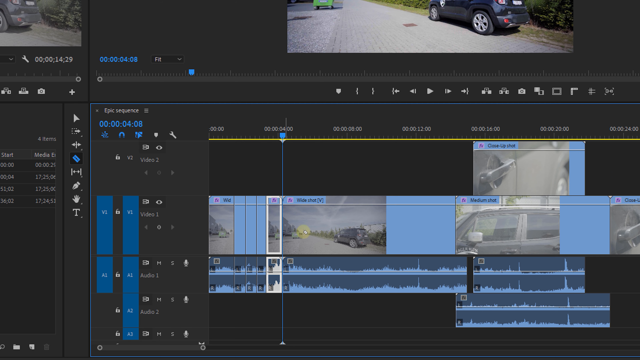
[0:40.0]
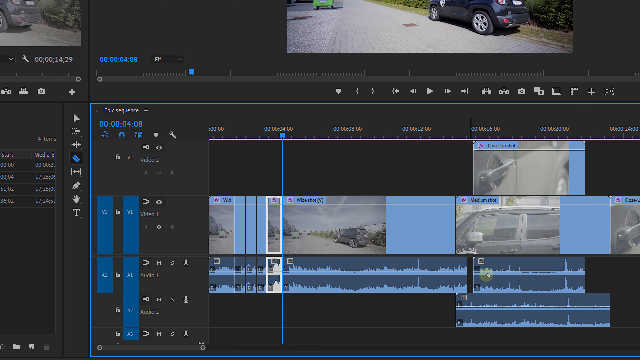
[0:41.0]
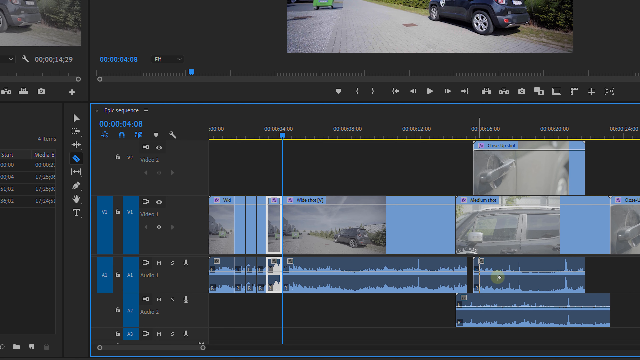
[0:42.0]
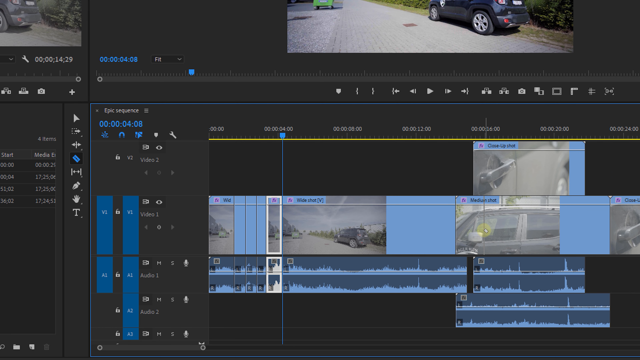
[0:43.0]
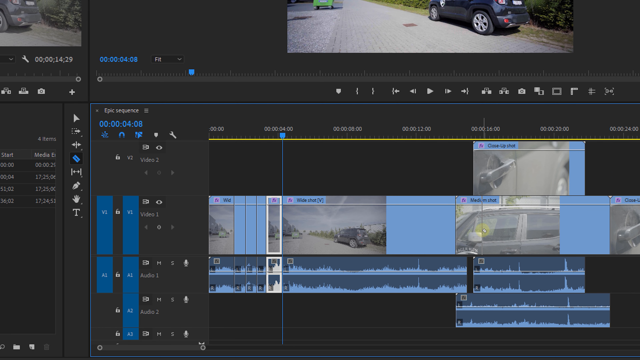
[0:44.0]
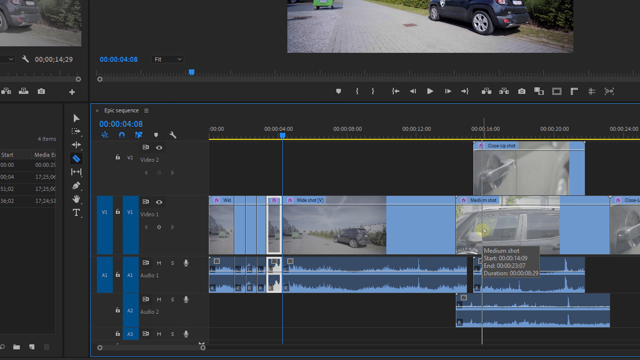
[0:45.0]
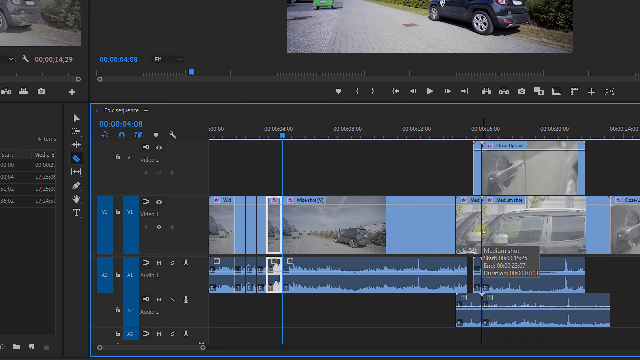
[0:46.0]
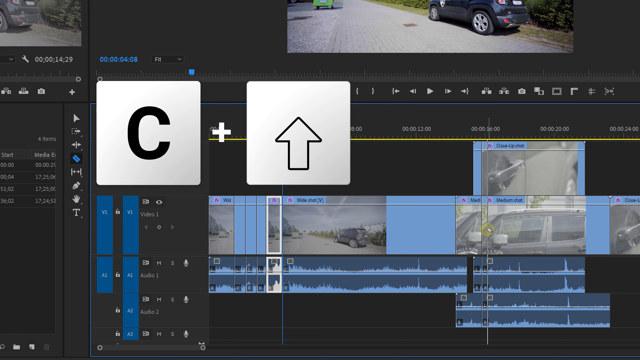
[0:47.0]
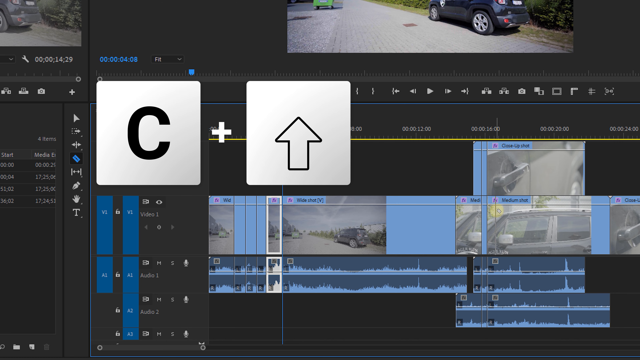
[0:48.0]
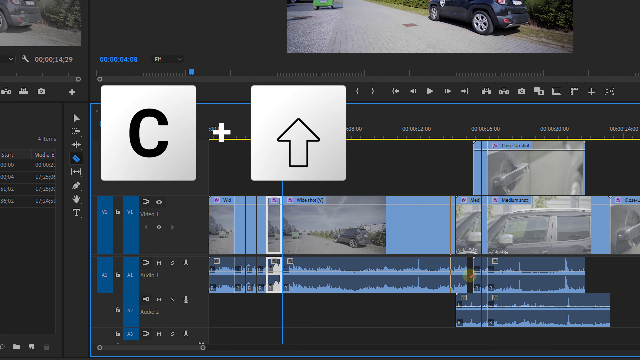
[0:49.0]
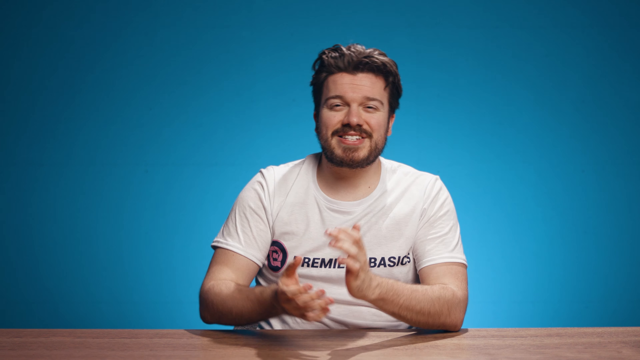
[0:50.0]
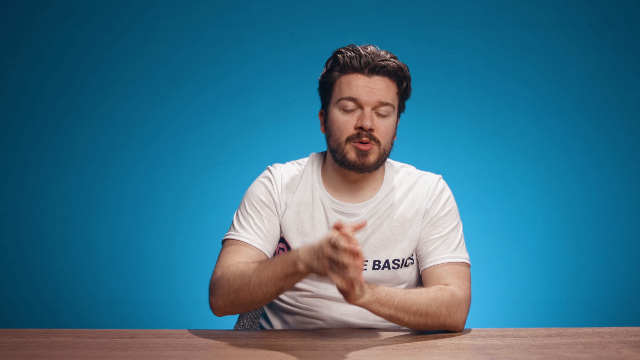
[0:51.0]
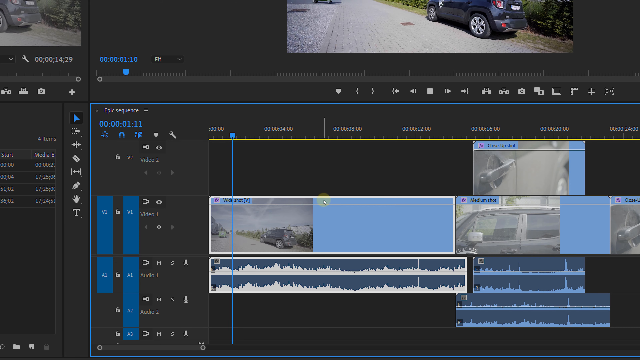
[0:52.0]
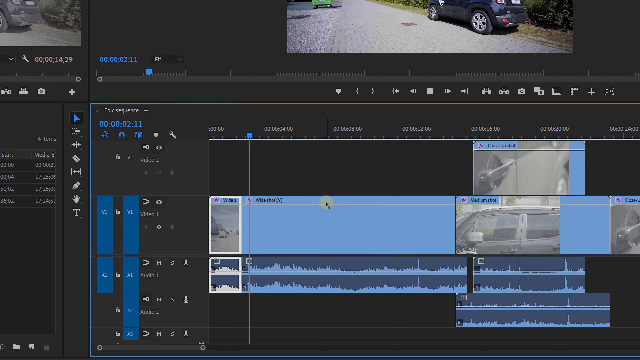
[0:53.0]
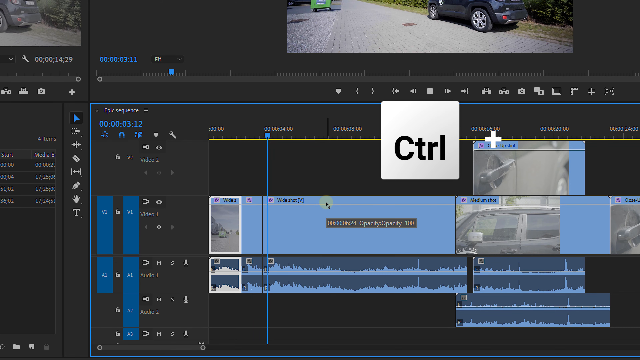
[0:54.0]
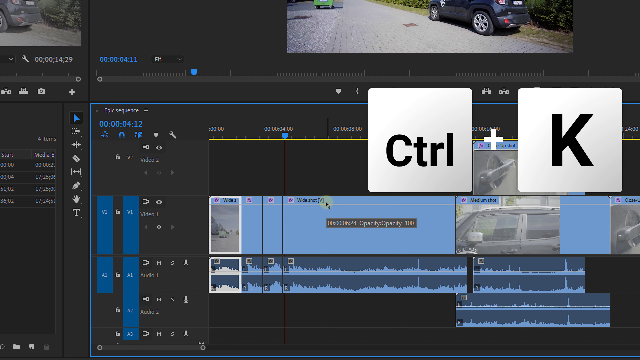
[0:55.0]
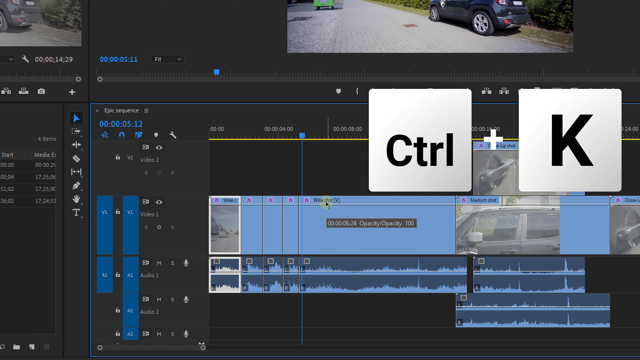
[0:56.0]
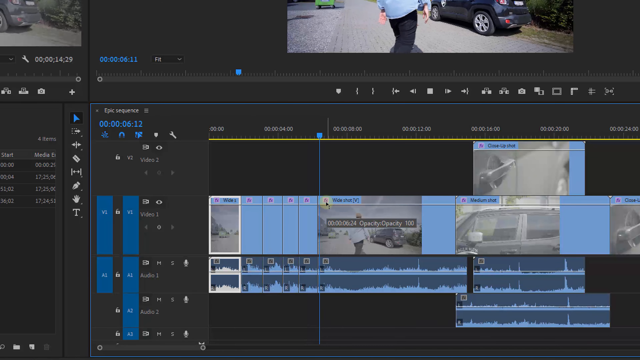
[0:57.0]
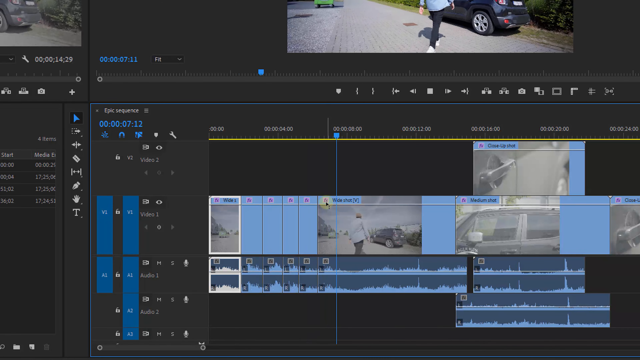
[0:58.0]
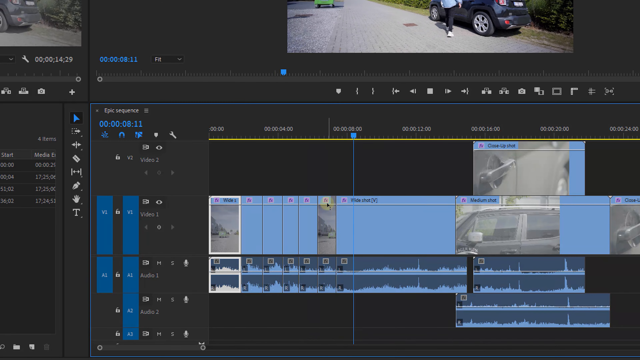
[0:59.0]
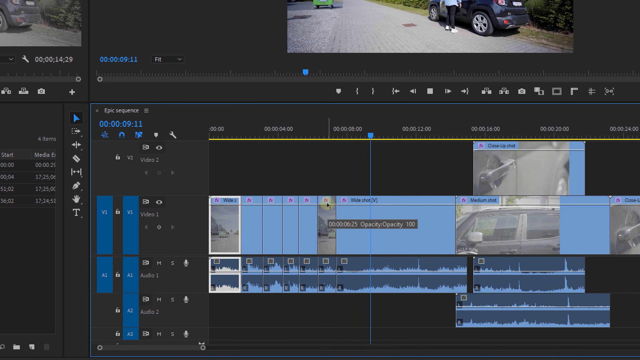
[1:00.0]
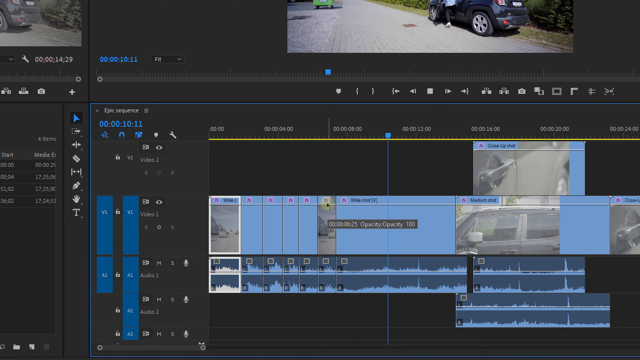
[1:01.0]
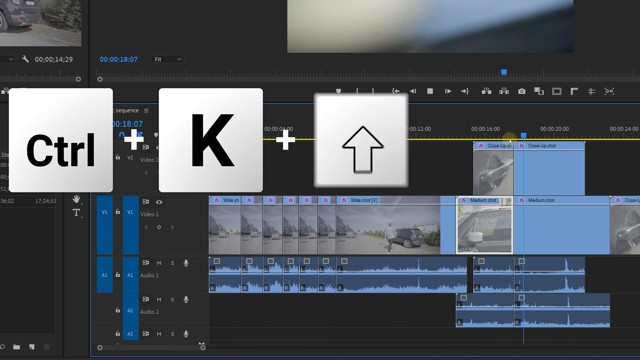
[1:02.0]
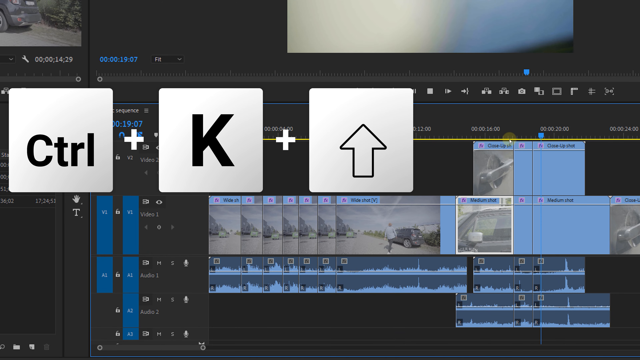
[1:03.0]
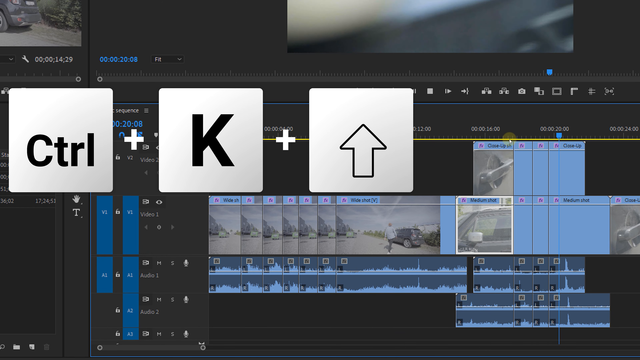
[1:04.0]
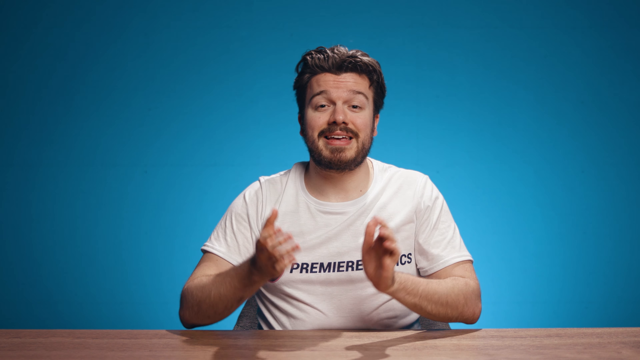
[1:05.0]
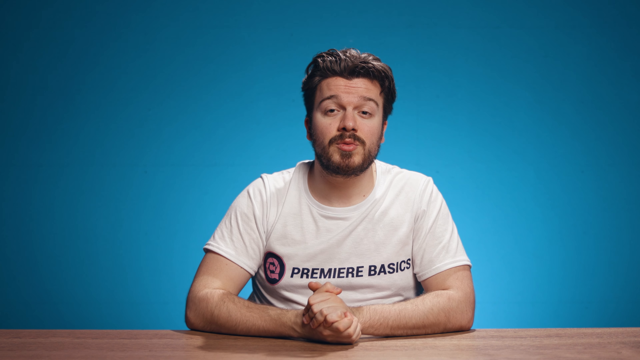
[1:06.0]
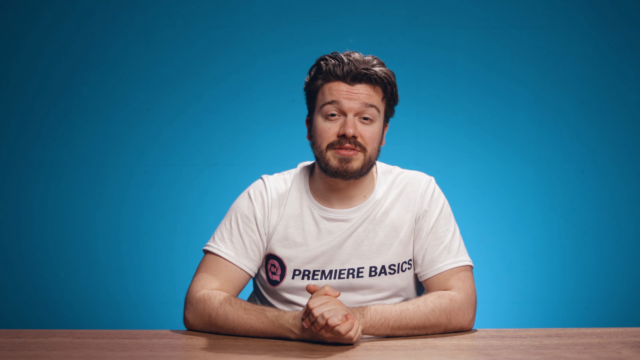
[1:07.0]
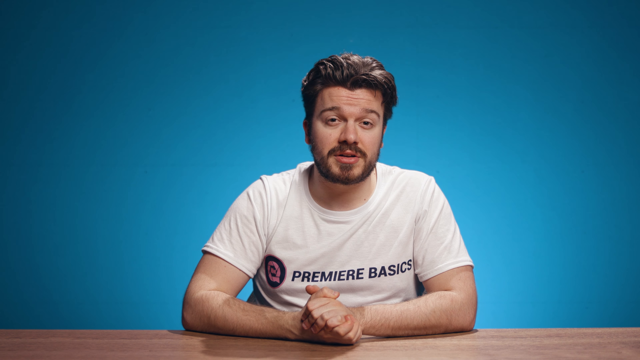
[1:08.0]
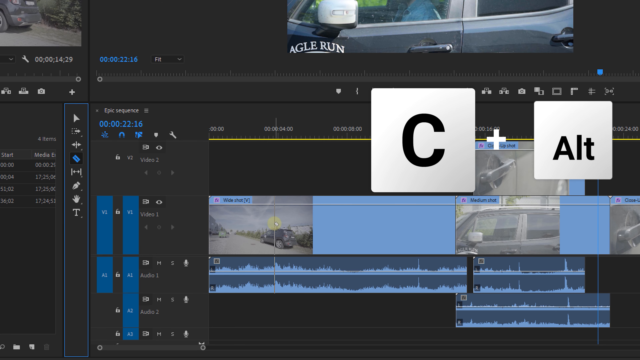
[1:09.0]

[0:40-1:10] The presenter appears, then a page on a PC is shown where something seems to be edited on the home screen. The presenter appears again, followed by more editing on the PC. A C plus an upward arrow is shown being pressed, along with C, T, R, L plus K. The screen is divided into two: one part shows a man going into a black car, while the presenter keeps appearing. C plus A, R, L is then shown on the screen, and the road and the car seem to be being edited.